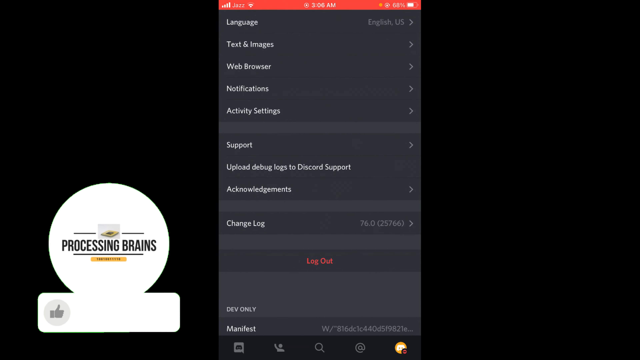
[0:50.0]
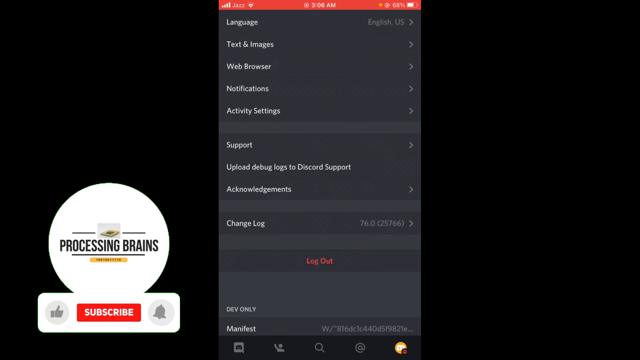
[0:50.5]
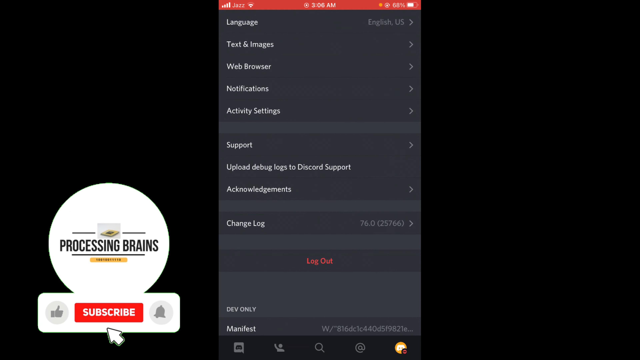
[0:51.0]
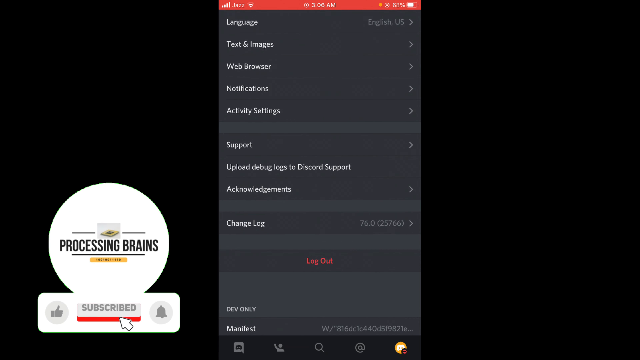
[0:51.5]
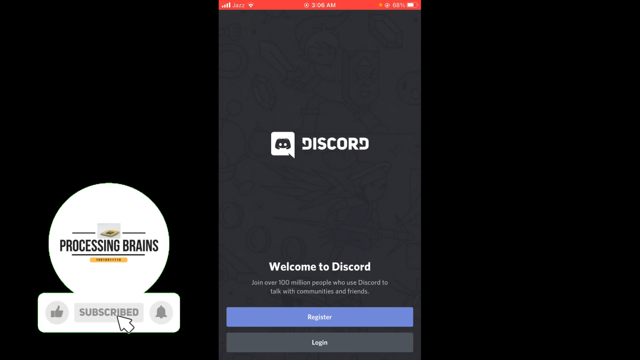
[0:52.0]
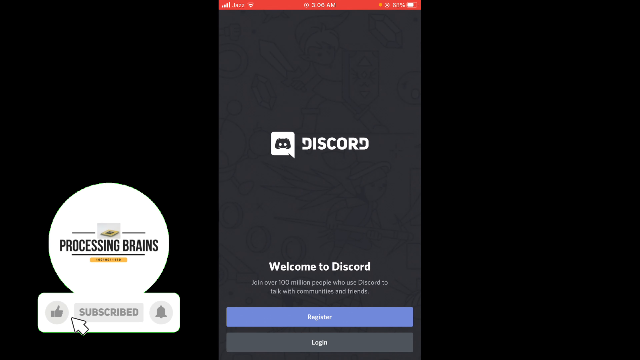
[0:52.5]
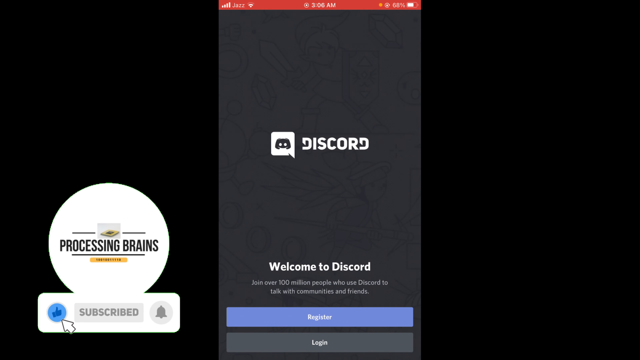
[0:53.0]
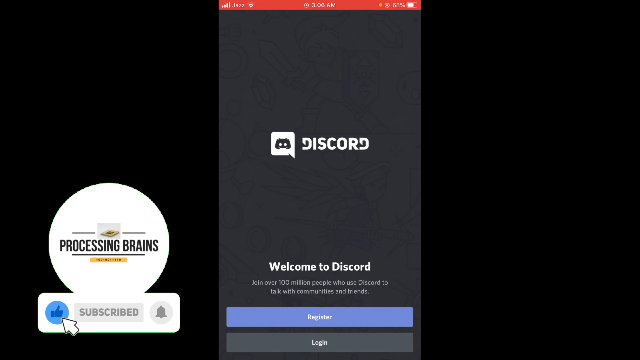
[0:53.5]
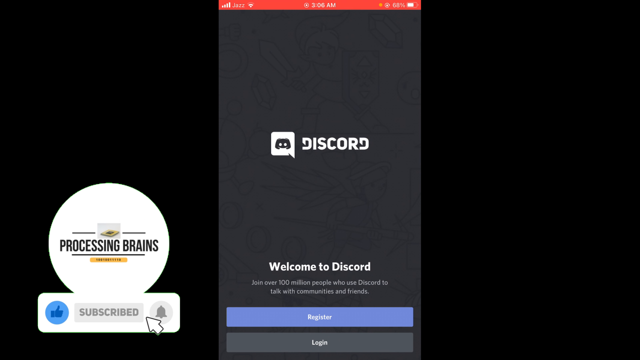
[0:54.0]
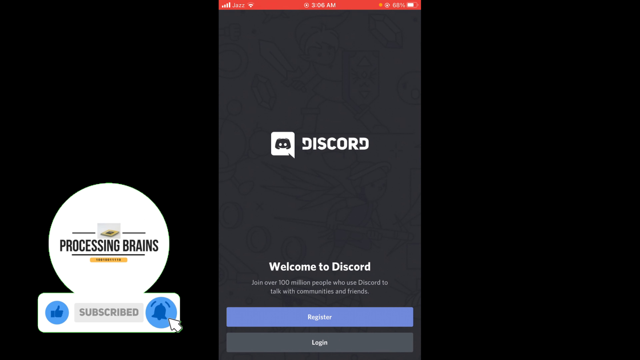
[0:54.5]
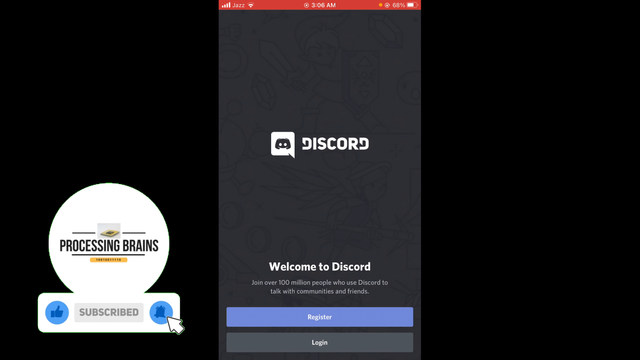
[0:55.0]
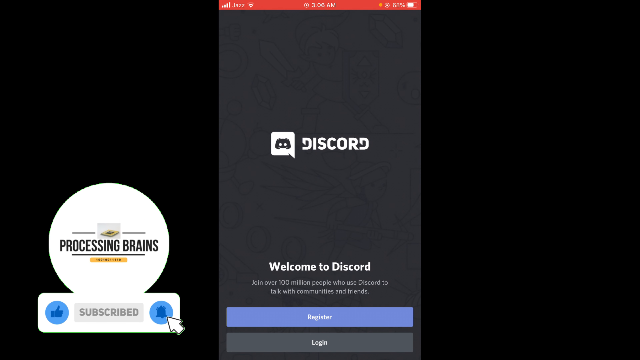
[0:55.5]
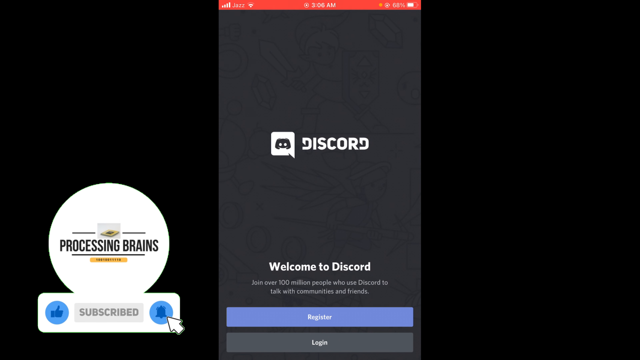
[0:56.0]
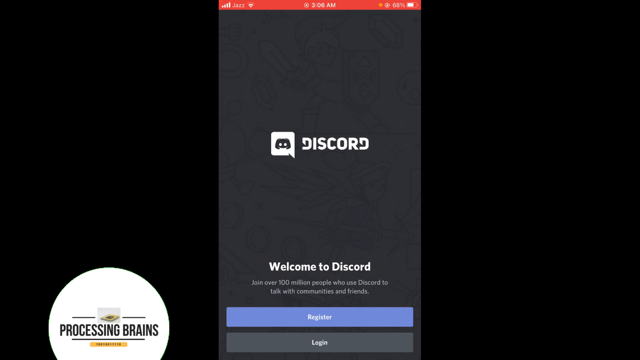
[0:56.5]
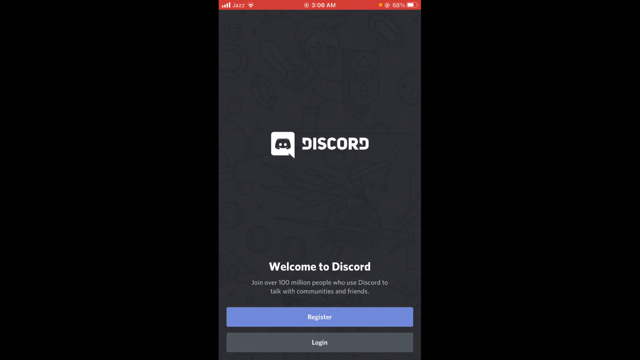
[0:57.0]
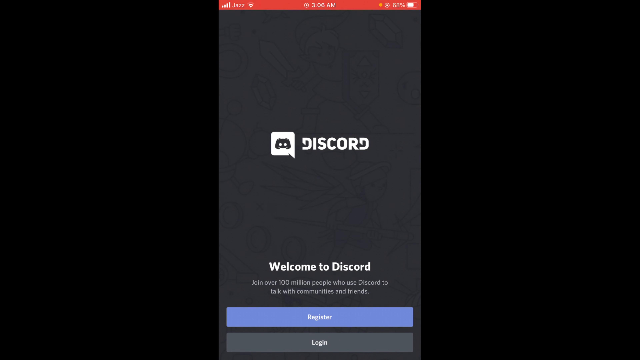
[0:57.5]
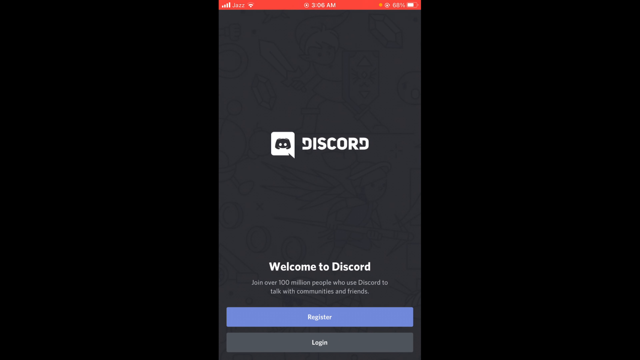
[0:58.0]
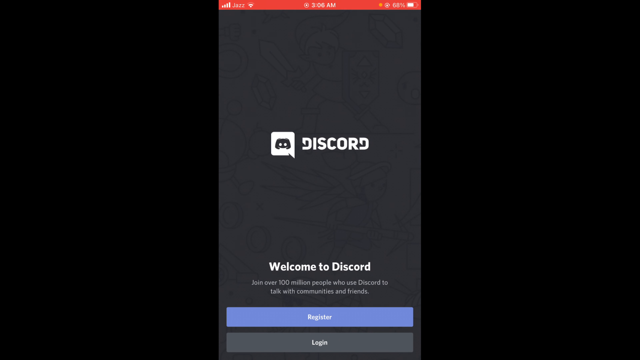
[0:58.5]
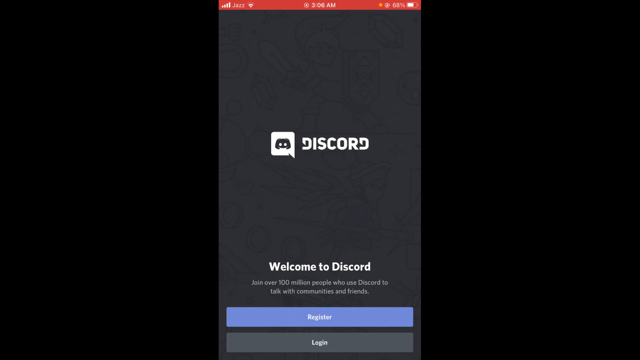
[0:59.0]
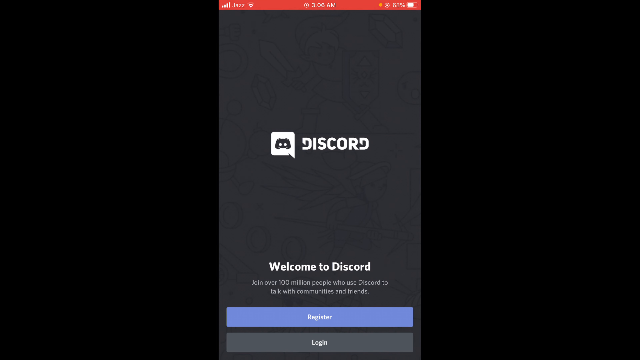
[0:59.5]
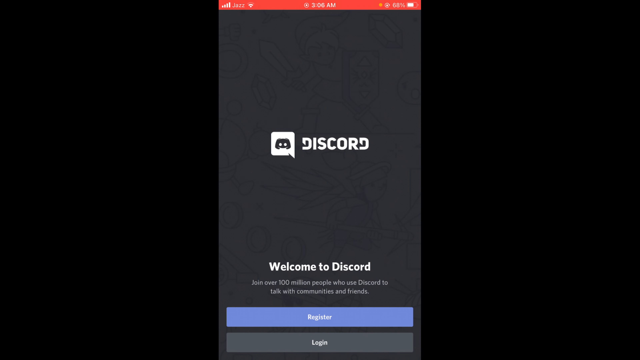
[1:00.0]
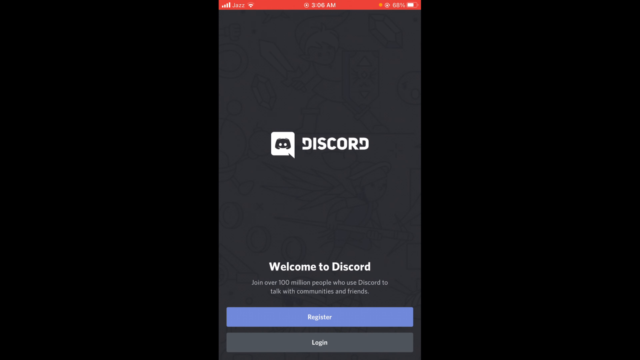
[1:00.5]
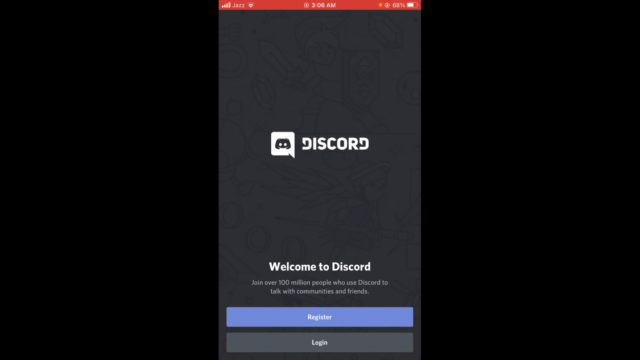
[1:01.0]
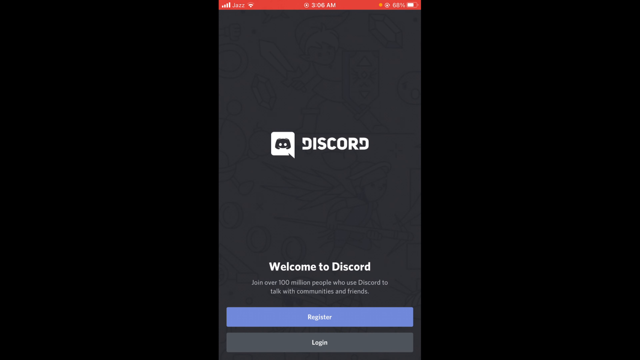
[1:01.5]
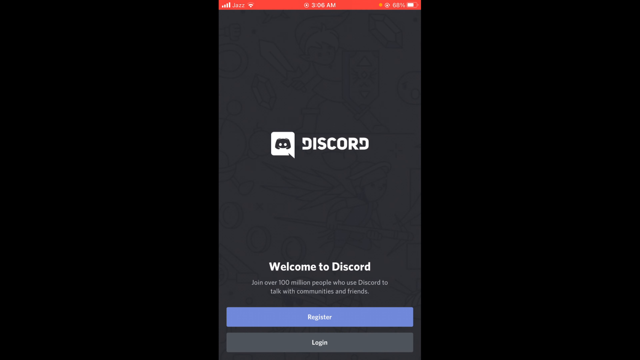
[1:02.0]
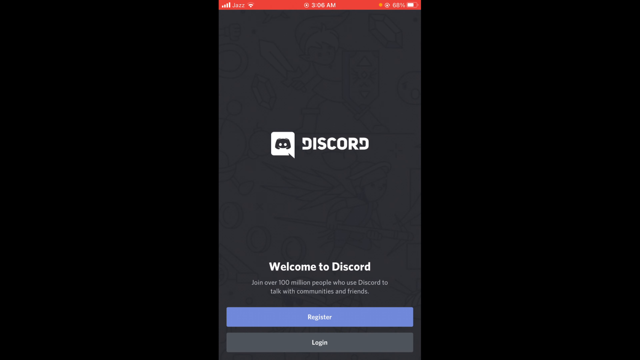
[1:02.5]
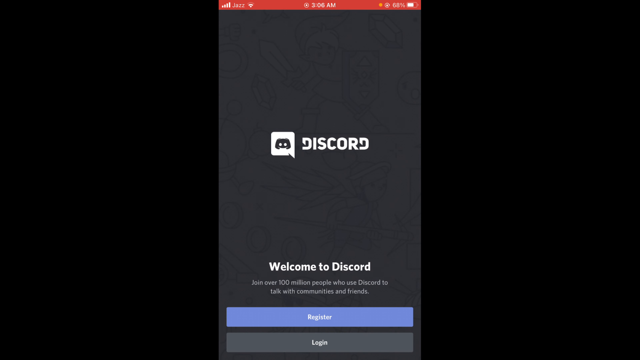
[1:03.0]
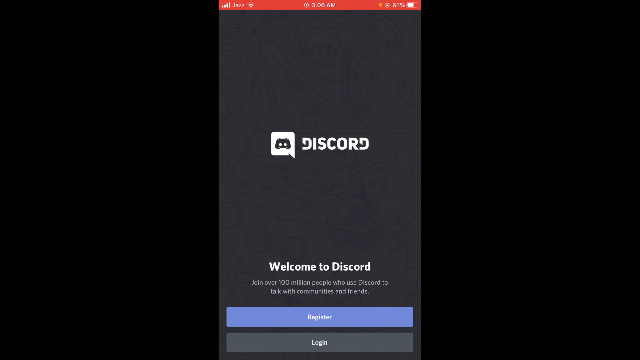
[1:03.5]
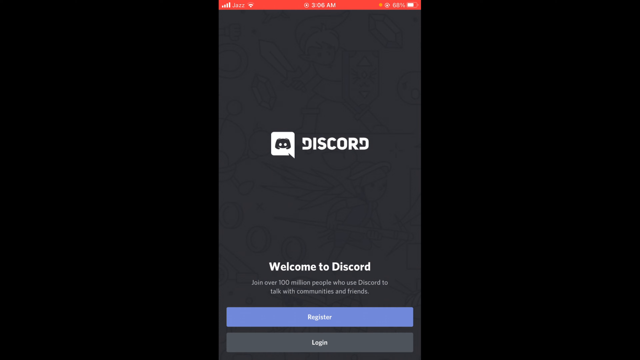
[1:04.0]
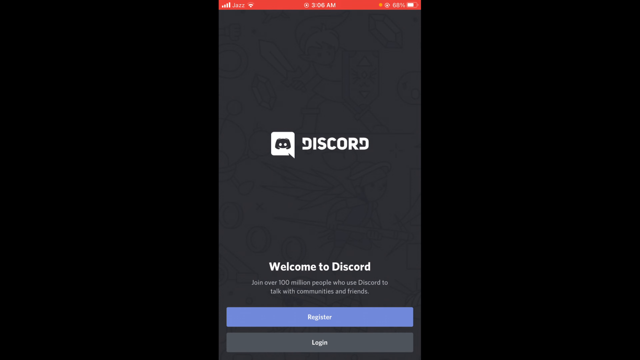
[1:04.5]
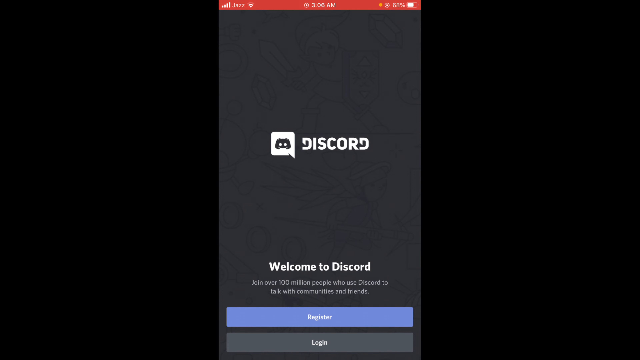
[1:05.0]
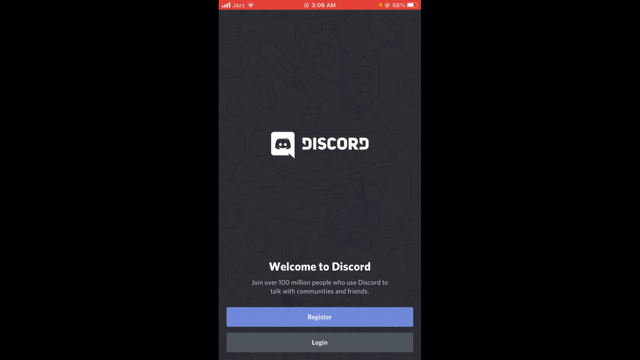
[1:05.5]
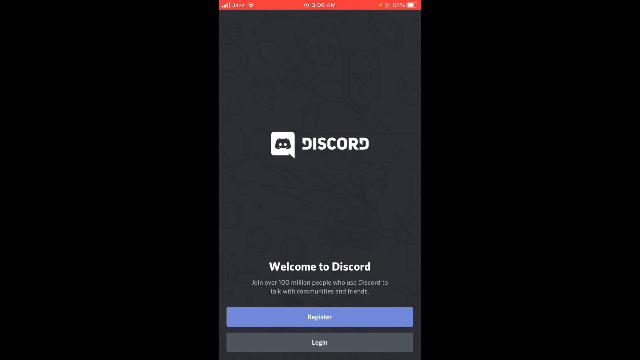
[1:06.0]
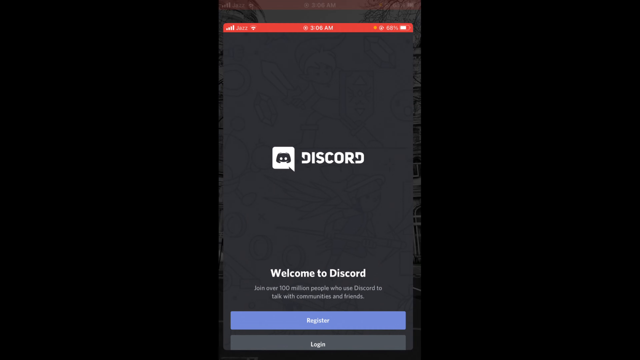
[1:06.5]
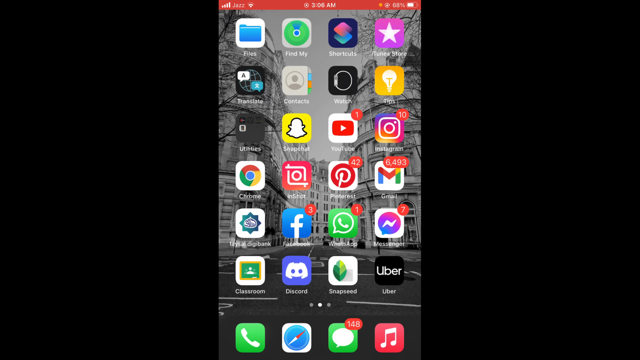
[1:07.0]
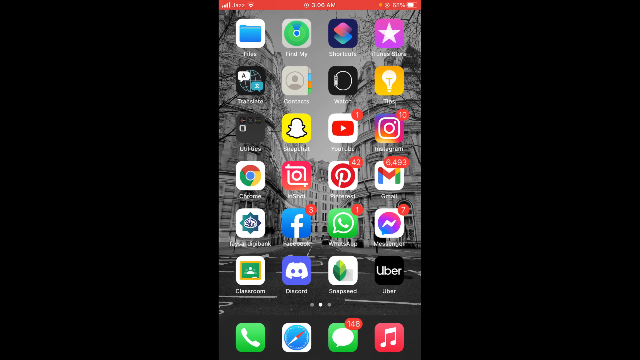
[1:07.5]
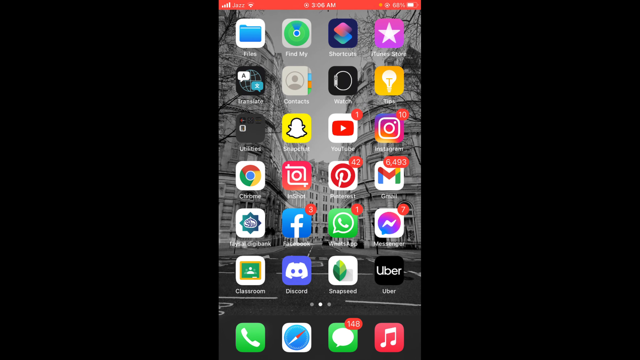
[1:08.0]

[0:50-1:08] An advertisement for Processing Brains appears. A bell is turned on for notifications, and the Discord welcome screen is shown, the screen from which a new user registers before logging in.